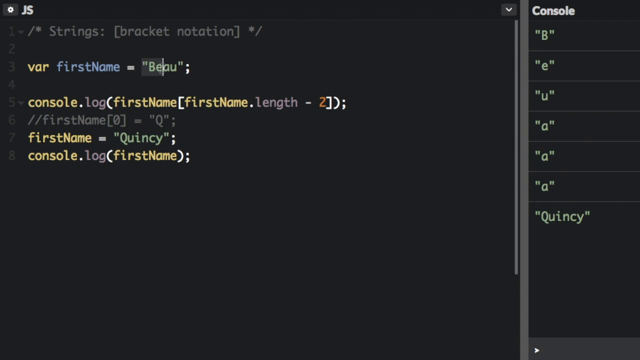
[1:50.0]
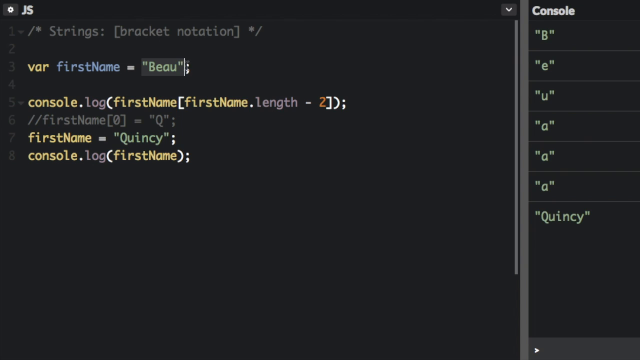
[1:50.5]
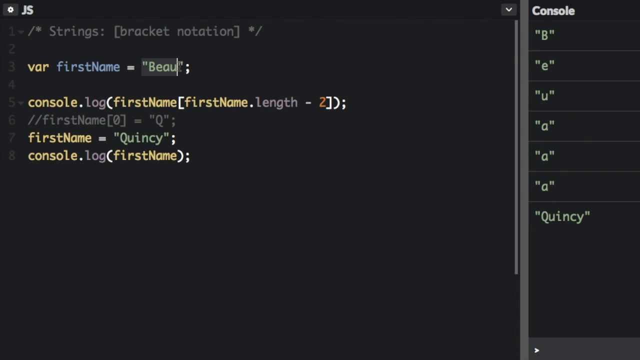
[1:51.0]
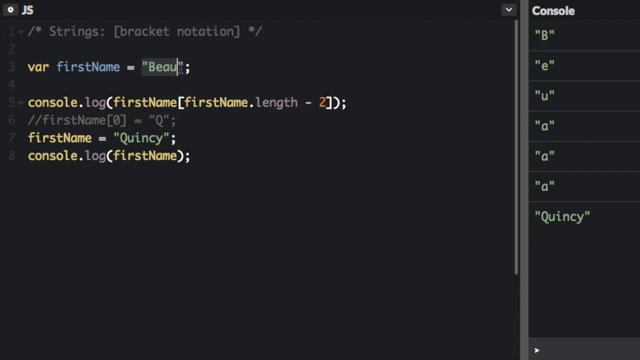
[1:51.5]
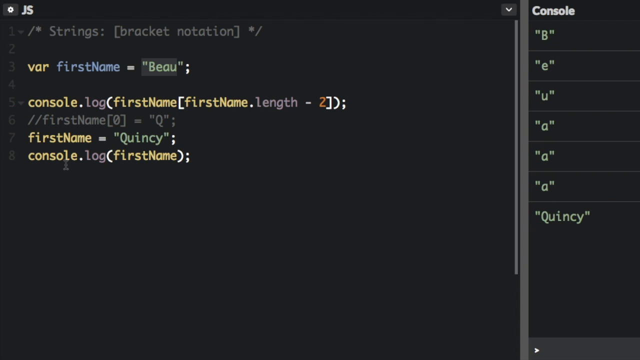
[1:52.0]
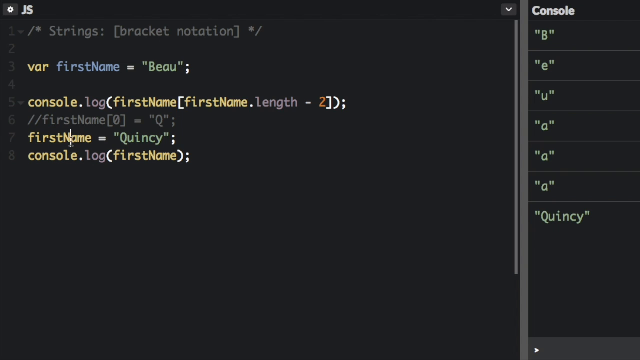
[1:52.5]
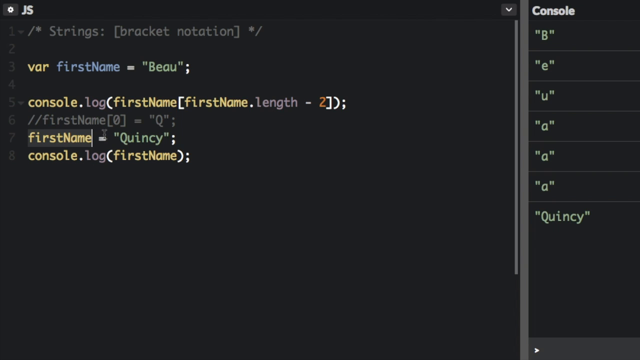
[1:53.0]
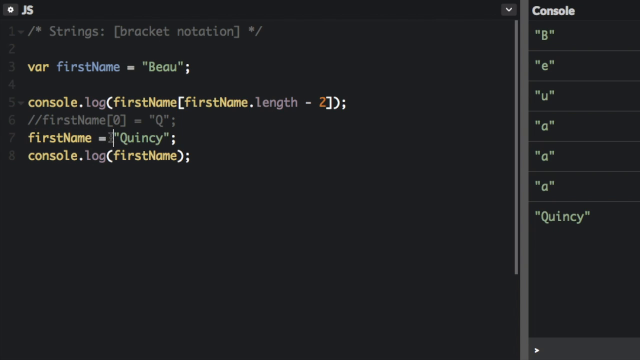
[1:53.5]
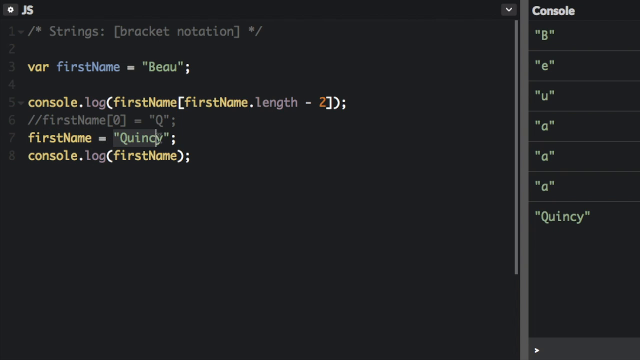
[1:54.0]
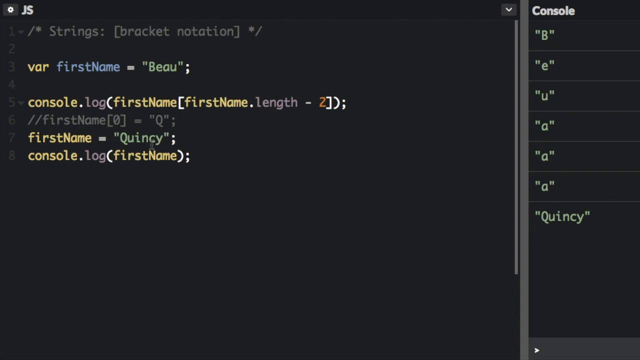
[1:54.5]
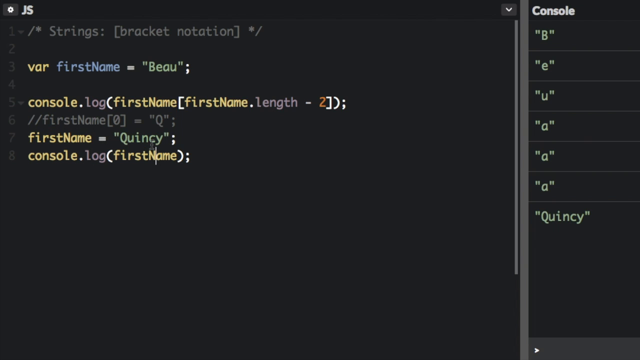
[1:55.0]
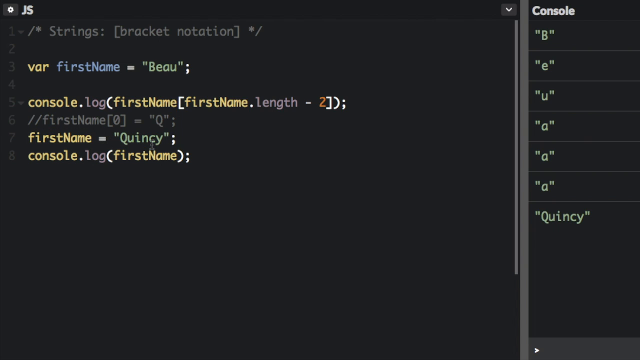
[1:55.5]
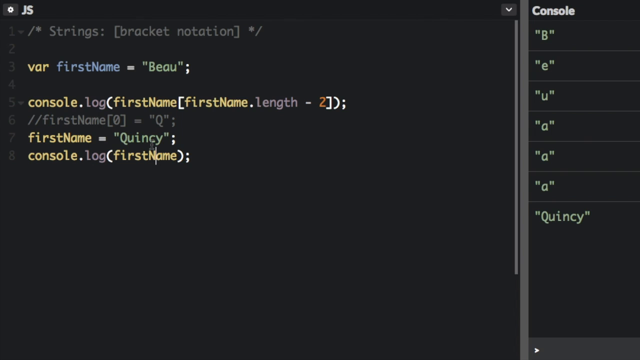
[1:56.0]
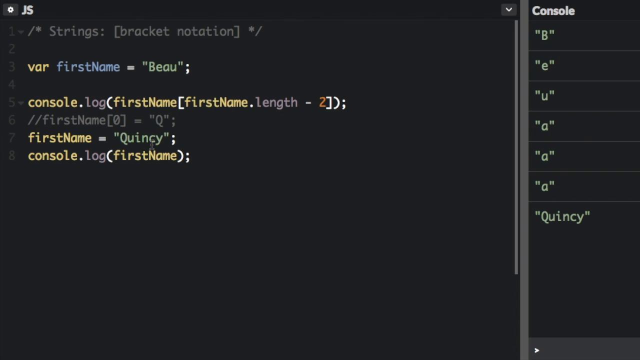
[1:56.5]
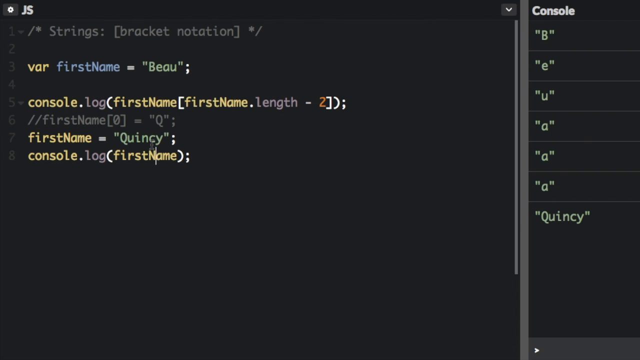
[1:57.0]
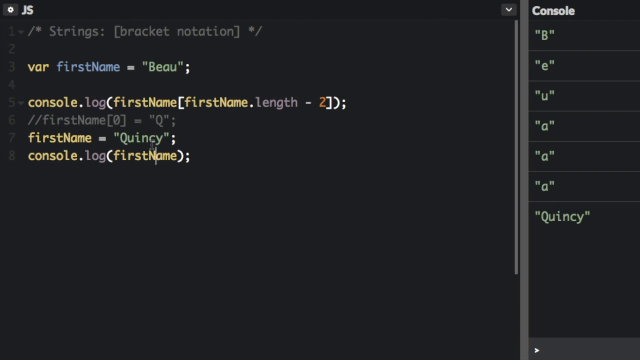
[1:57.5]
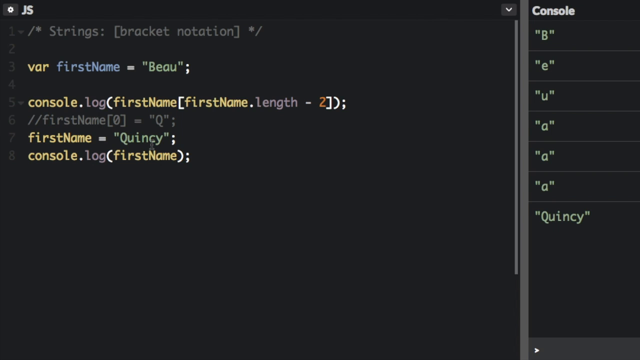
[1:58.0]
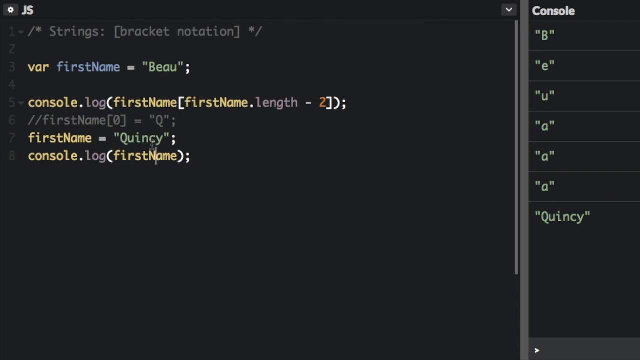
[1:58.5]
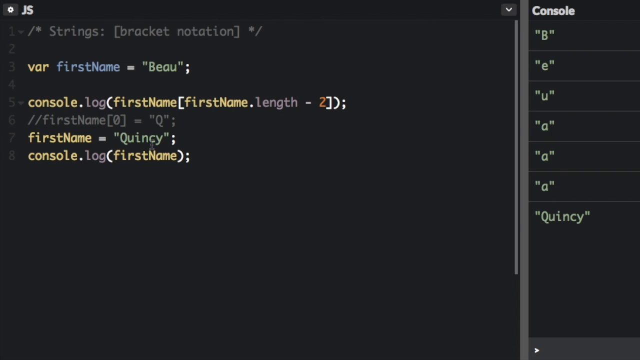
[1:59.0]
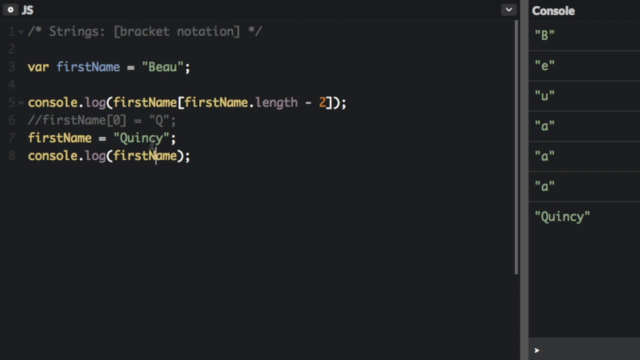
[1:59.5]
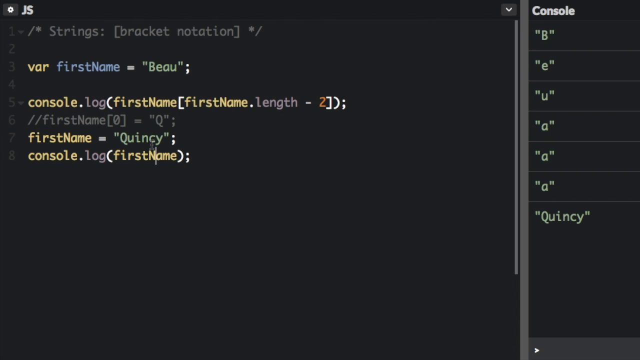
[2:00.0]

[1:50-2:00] The name Beau at the end of line 3 is highlighted, and the highlight moves down to the name Quincy on line 7. The cursor then moves to just after the n in firstName on line 8 and flashes there, before moving back to Beau and highlighting it. It then moves back to line 7 and highlights all of firstName Quincy, and then returns to after the n on line 8. Line 8 reads console.log, with "console" in yellow font and "log" in gray font, followed by an open bracket, firstName in yellow font, a close bracket and a semicolon. No further entries are made in the right-hand column. Something seems to be being done with the names Beau and Quincy.